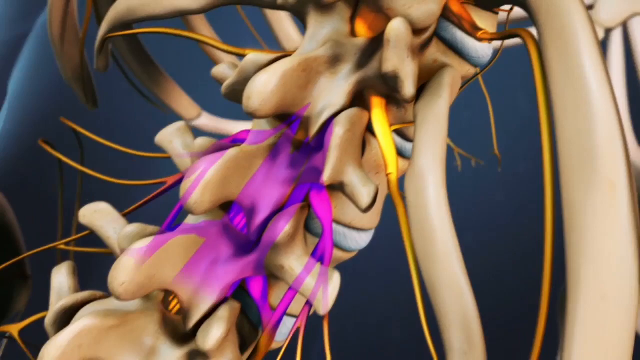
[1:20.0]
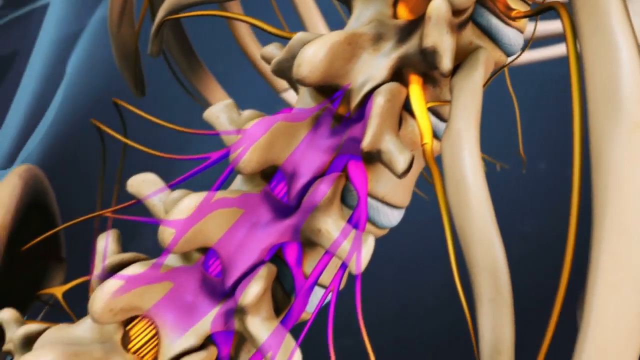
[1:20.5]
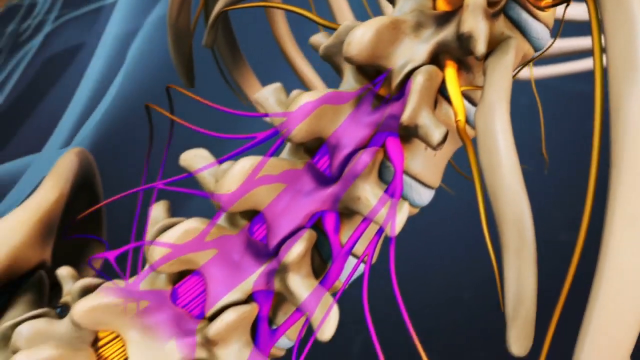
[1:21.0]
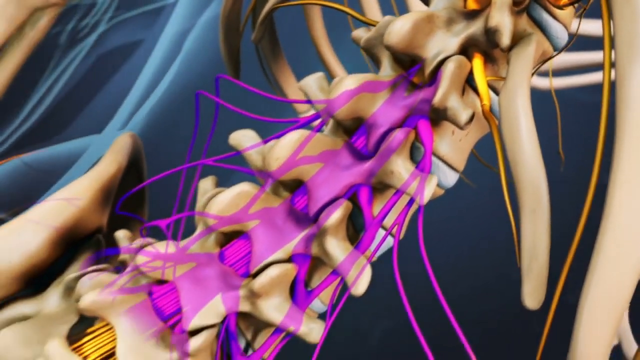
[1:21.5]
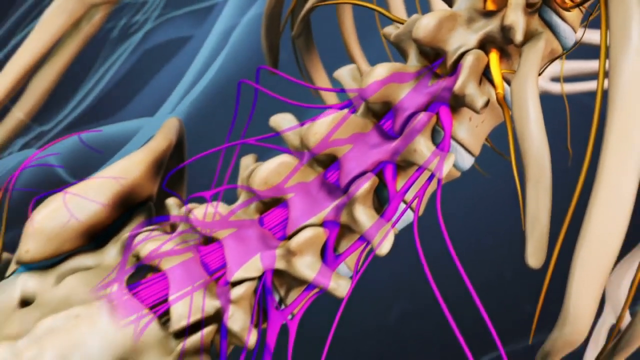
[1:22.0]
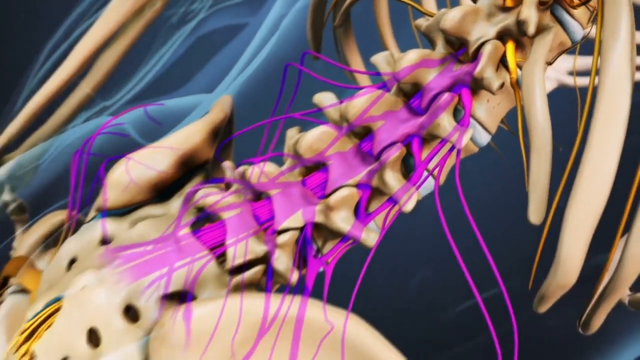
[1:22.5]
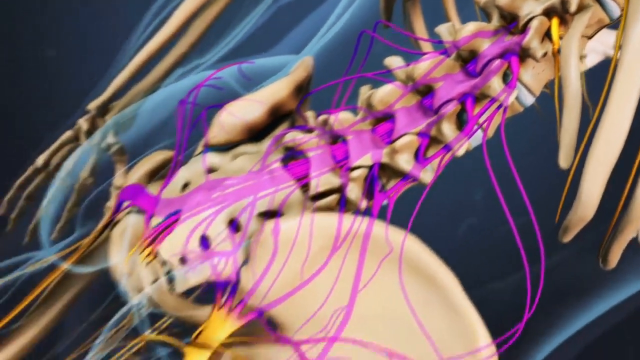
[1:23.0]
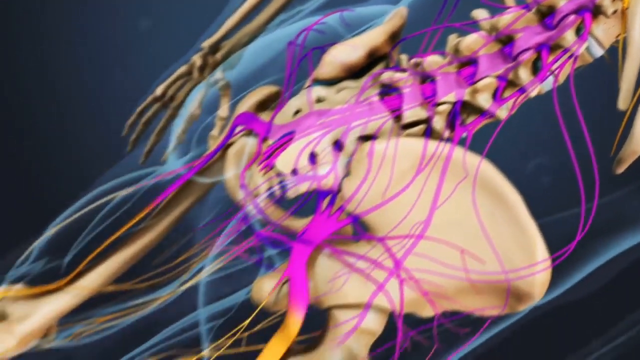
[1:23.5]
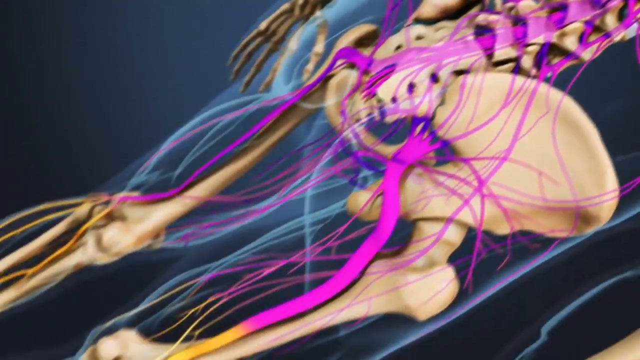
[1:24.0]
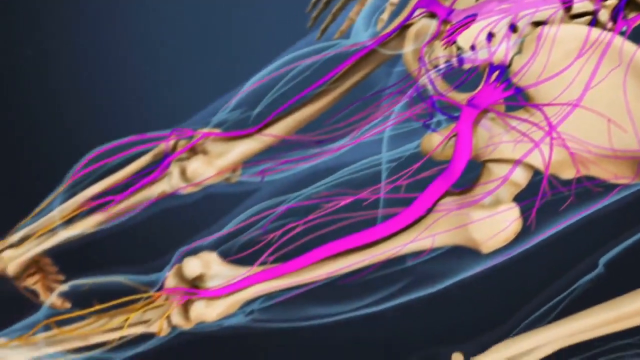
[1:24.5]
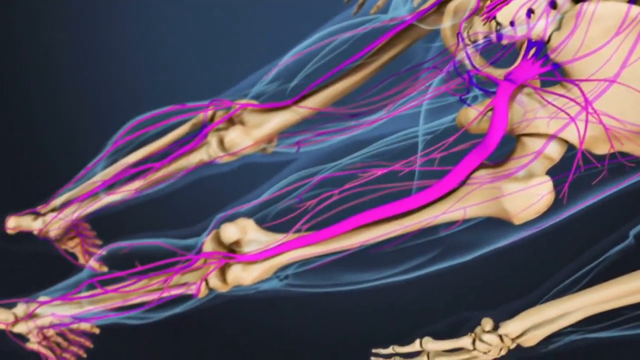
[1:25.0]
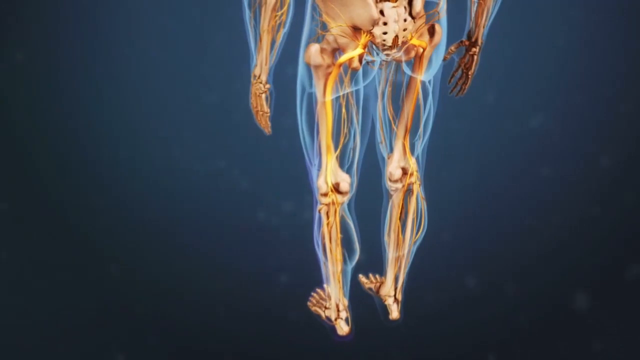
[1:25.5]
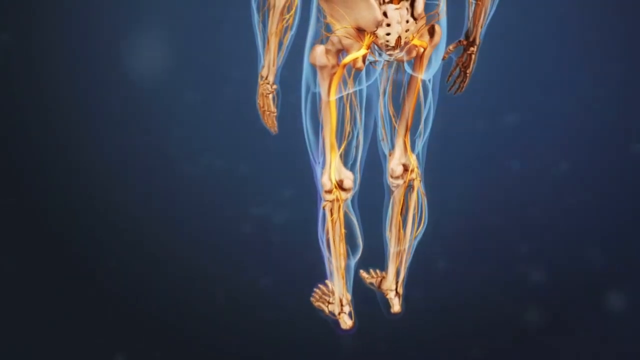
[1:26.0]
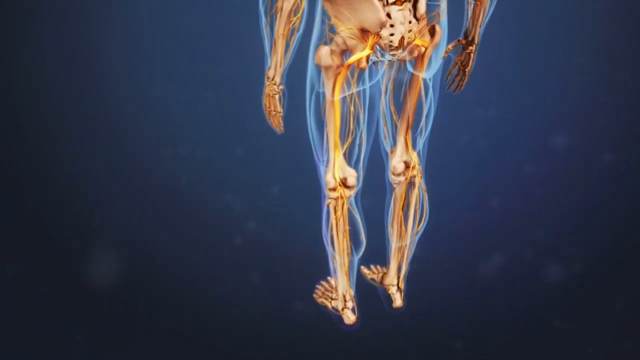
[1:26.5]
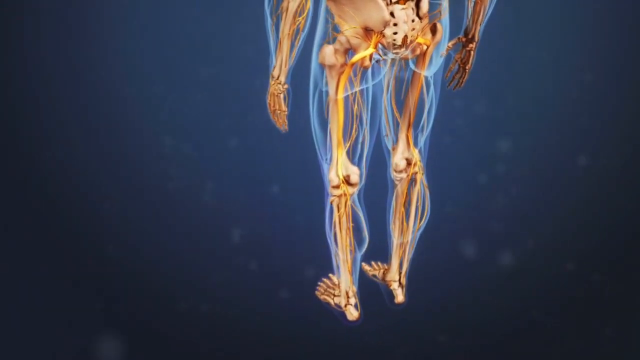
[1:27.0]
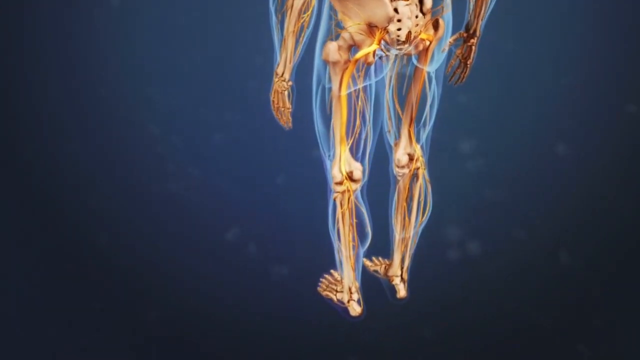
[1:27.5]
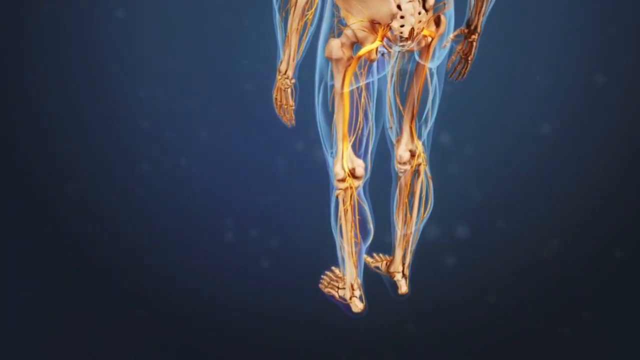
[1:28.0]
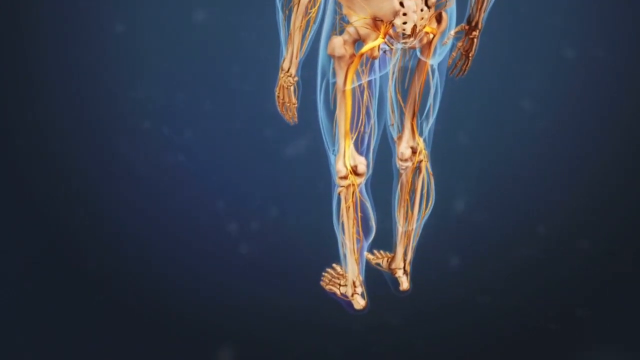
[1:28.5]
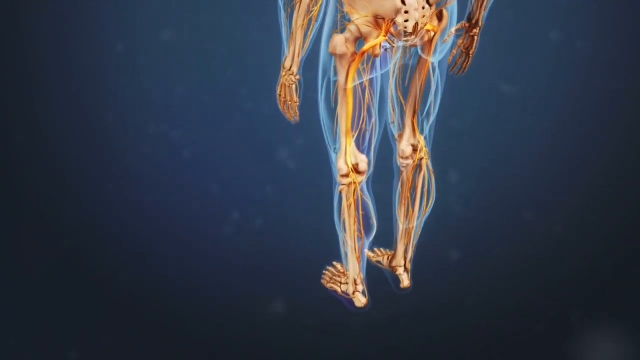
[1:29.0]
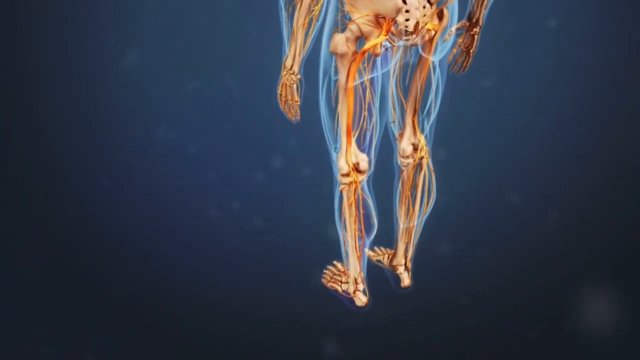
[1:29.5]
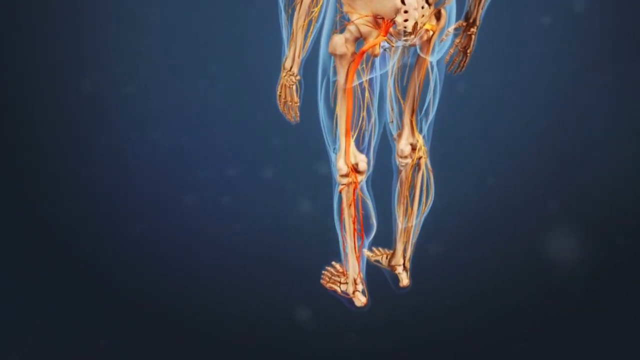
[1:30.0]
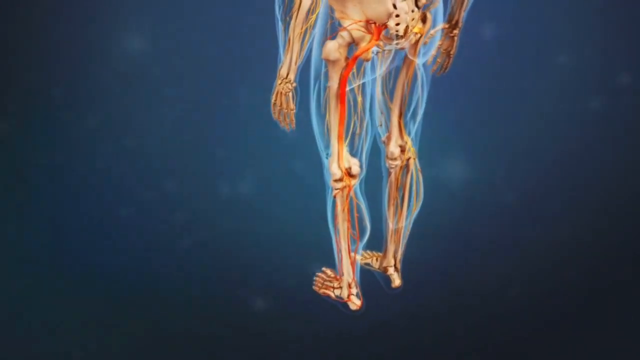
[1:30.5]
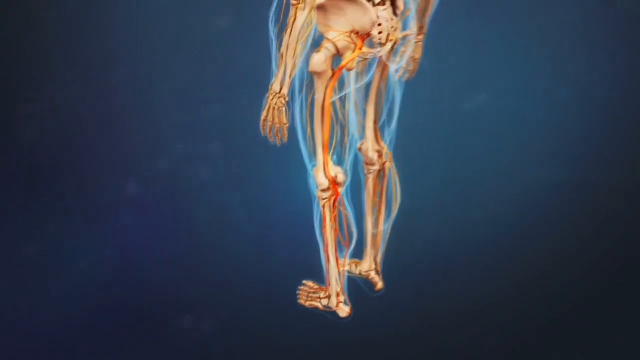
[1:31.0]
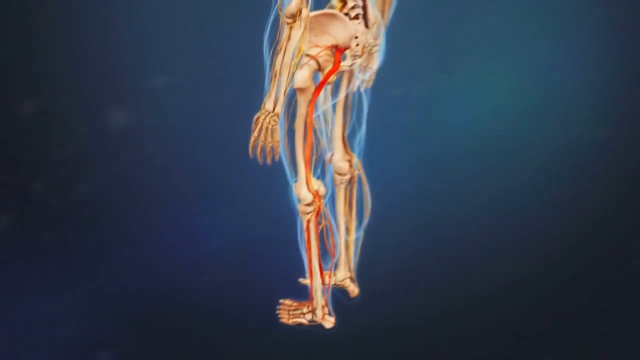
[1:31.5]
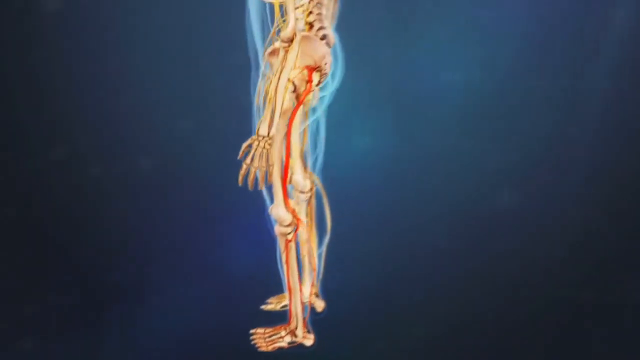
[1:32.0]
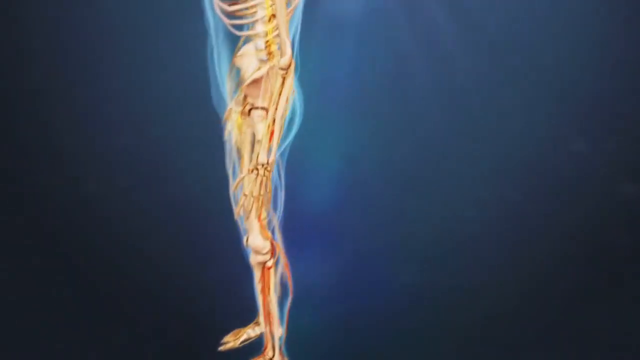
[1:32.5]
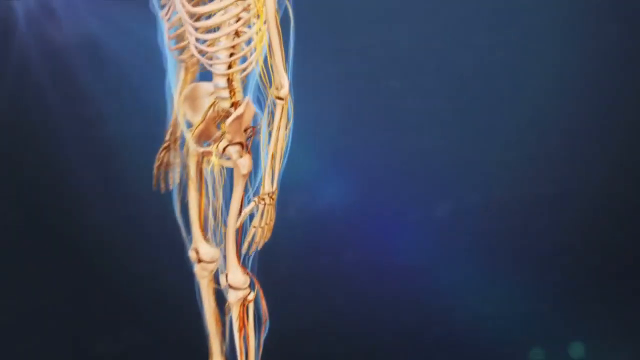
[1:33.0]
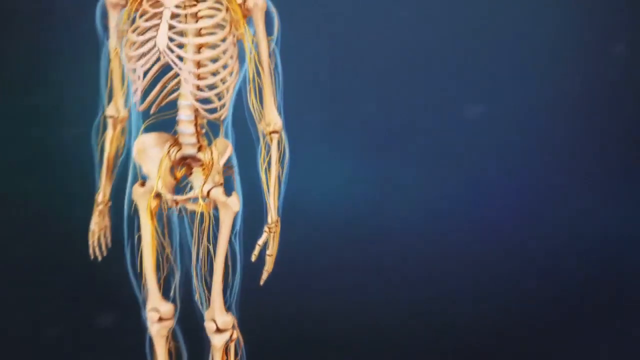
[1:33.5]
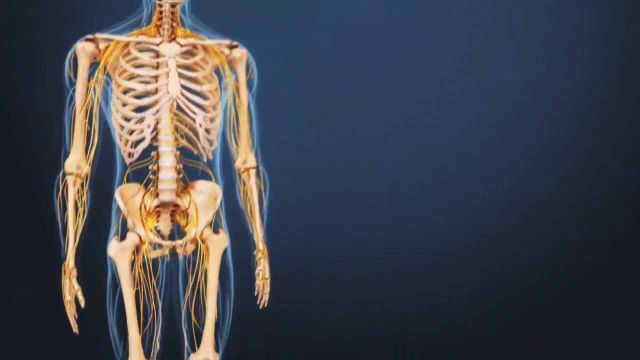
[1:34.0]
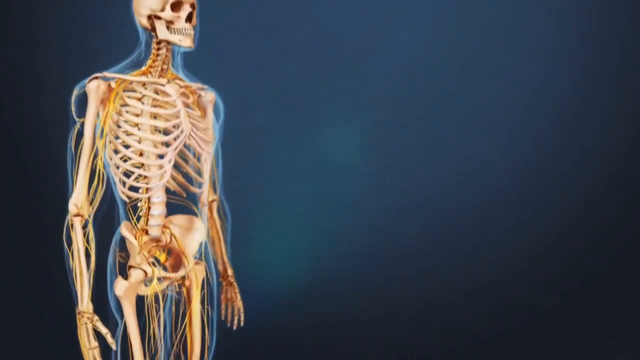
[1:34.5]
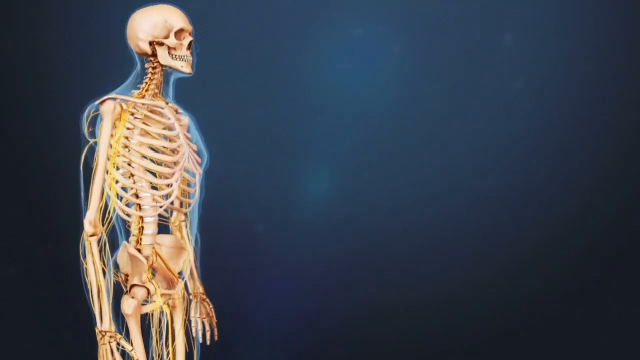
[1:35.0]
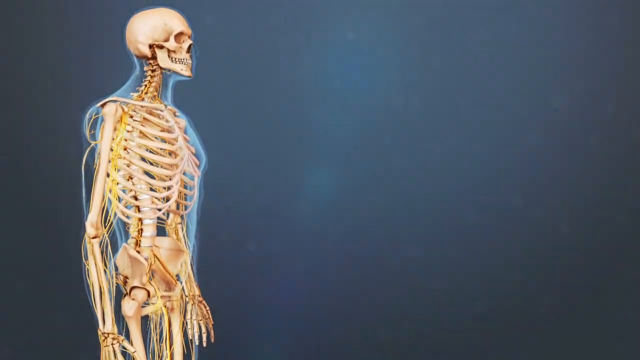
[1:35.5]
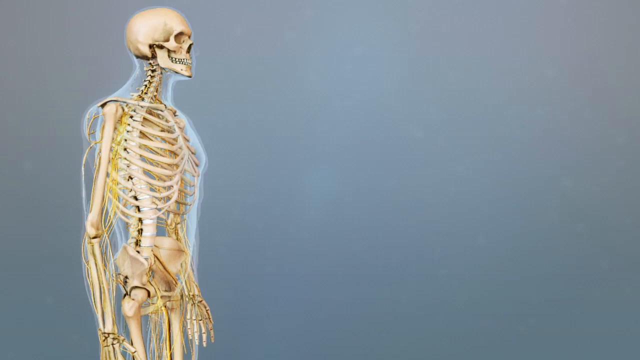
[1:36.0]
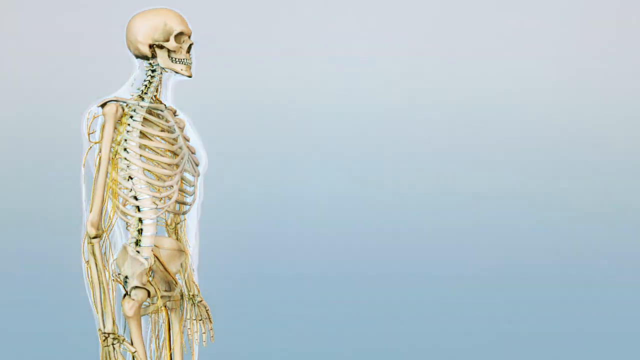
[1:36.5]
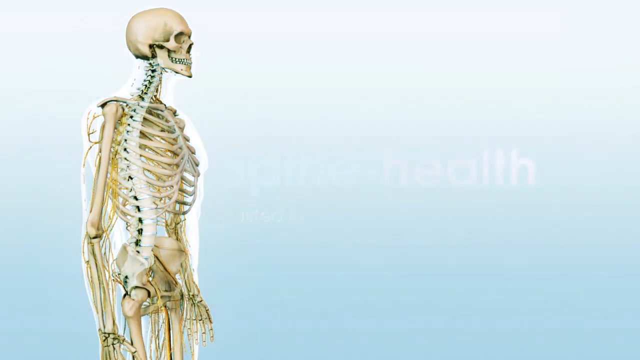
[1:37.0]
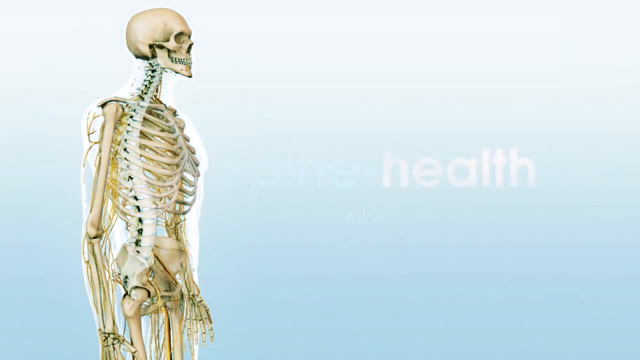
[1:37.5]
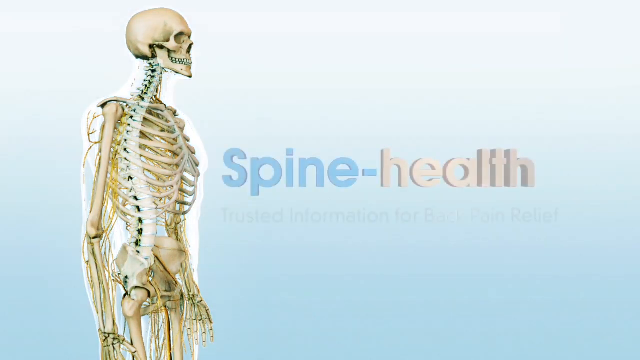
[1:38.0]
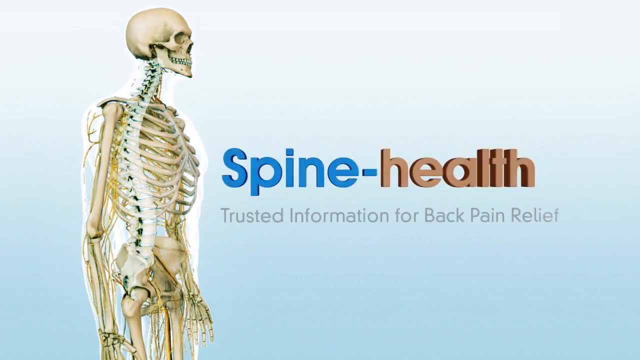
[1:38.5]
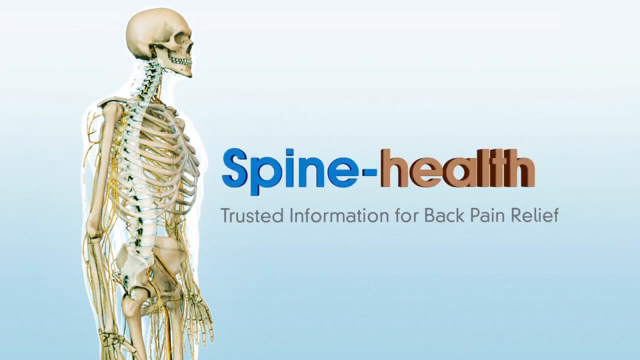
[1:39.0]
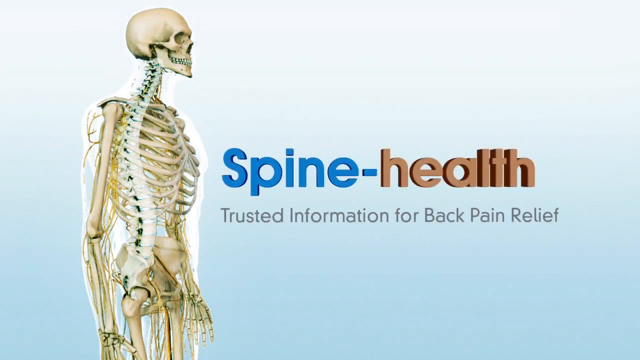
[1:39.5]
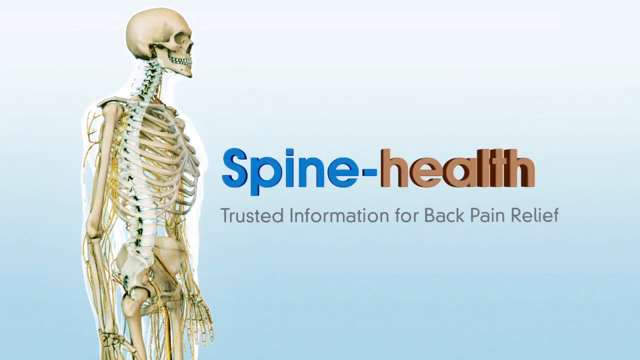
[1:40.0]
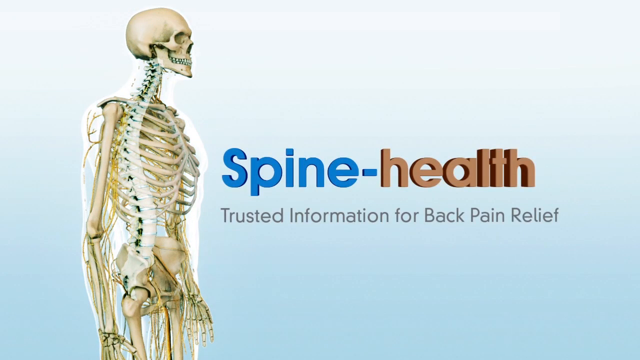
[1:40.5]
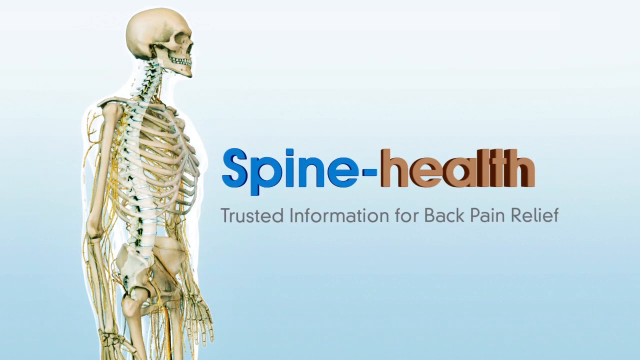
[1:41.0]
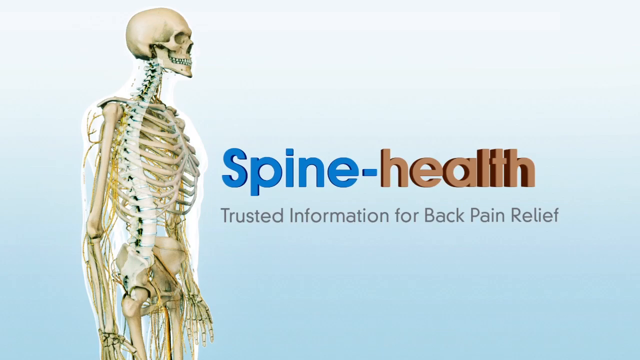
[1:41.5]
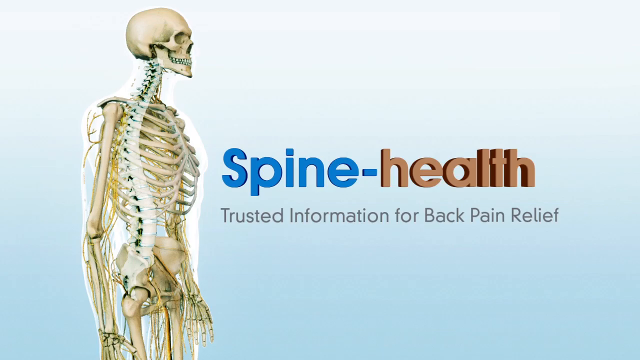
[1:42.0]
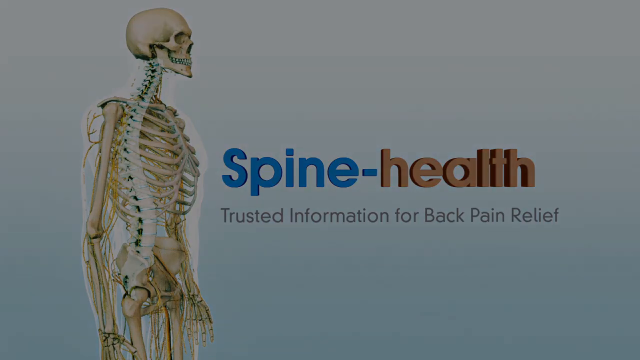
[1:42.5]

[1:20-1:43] The view continues along the spine, with pink highlights stretching over the nerves, ligament connections and blood vessels that run from the spine all the way down to the heels of the foot. The video then returns to the silhouette of the skeleton standing at attention on the left side of the screen, and on the right side the text "spine-health" appears once again, with "spine-" written in blue and "health" in orange, and underneath it "trusted information for back pain relief," against a white background.